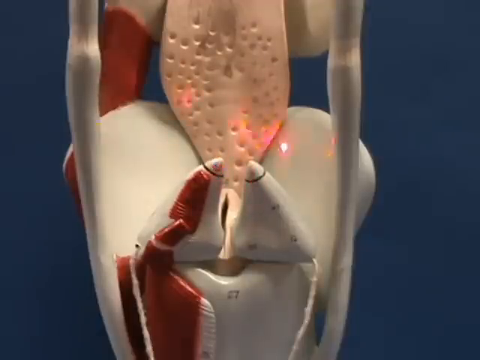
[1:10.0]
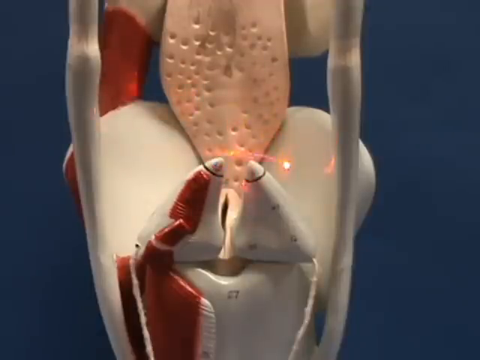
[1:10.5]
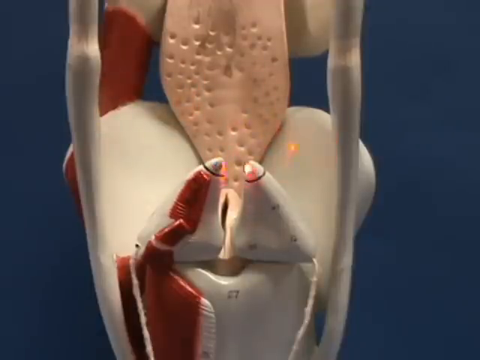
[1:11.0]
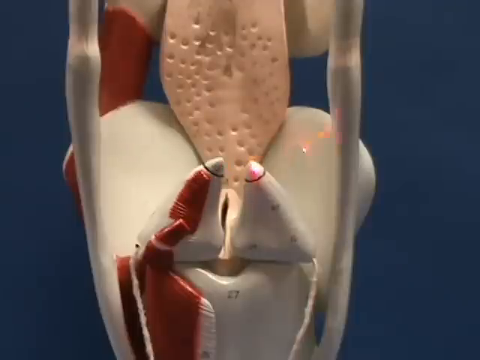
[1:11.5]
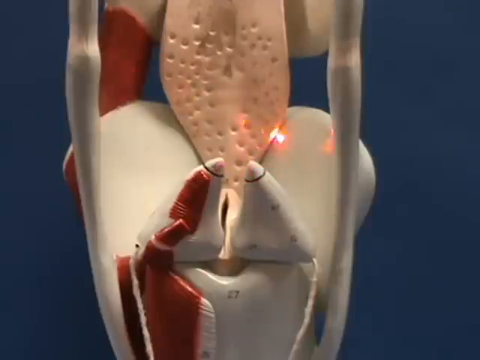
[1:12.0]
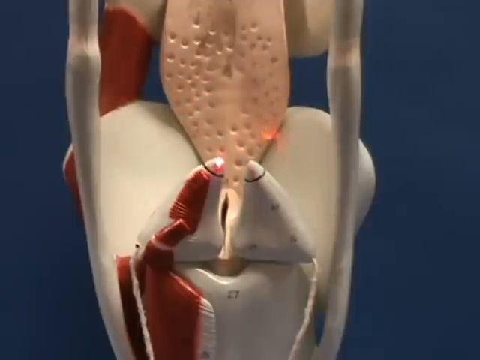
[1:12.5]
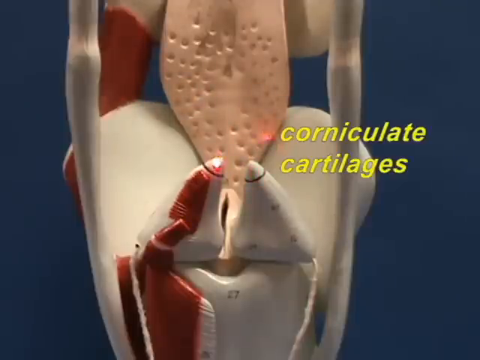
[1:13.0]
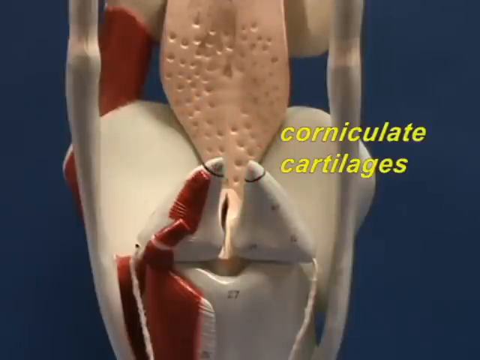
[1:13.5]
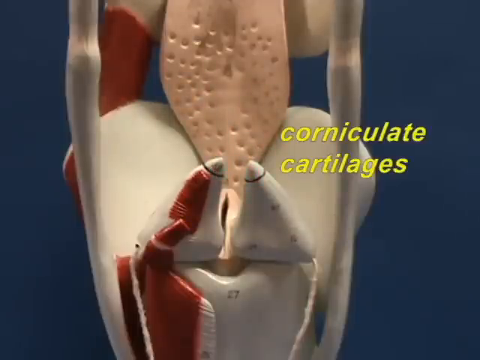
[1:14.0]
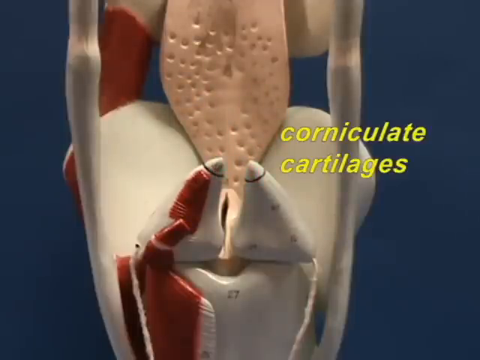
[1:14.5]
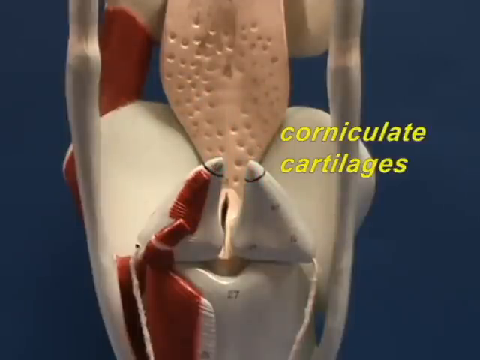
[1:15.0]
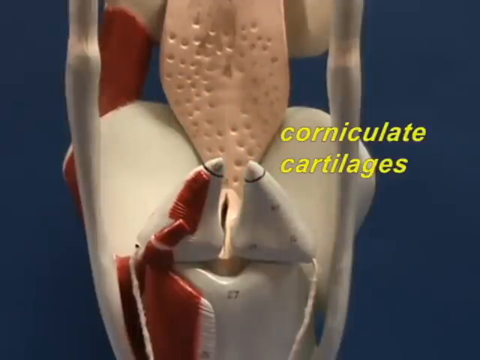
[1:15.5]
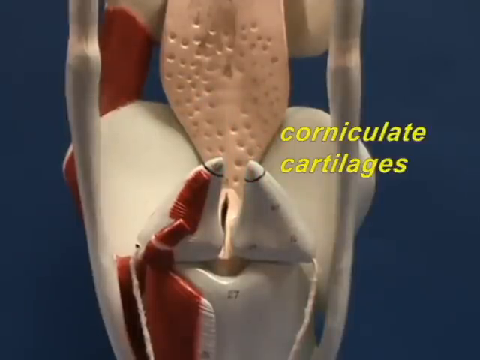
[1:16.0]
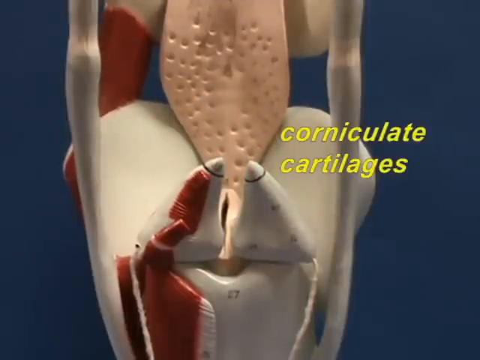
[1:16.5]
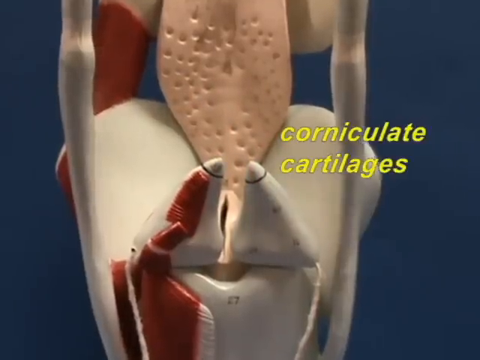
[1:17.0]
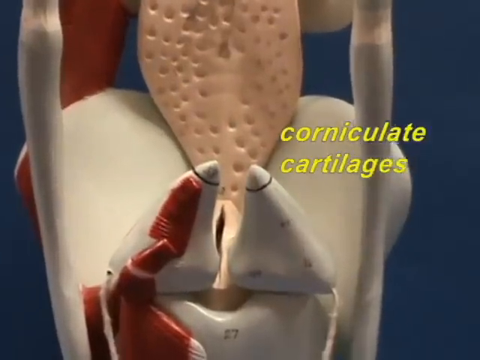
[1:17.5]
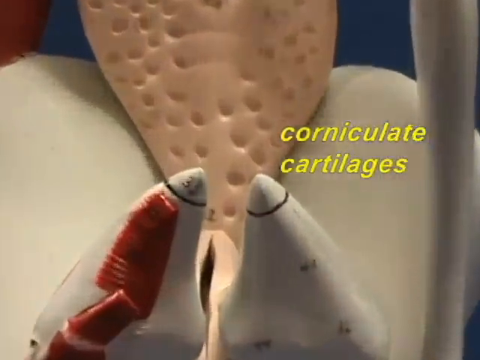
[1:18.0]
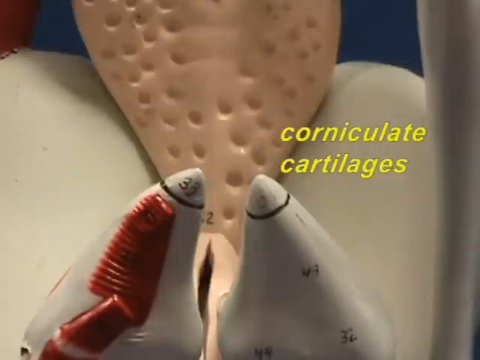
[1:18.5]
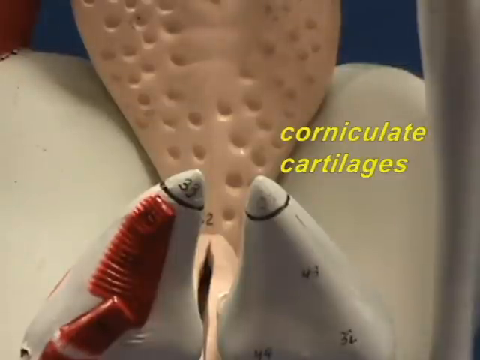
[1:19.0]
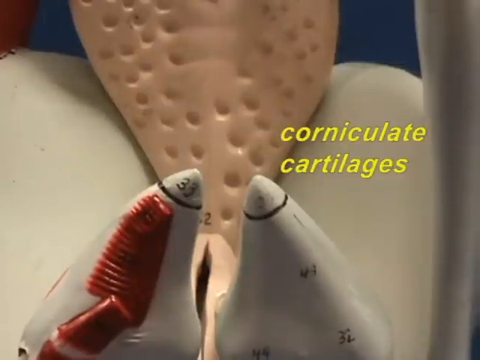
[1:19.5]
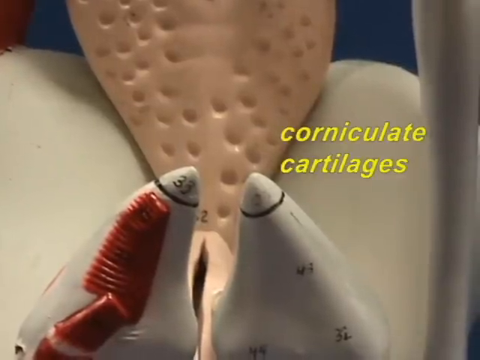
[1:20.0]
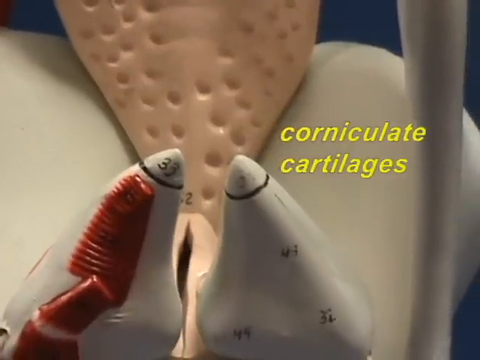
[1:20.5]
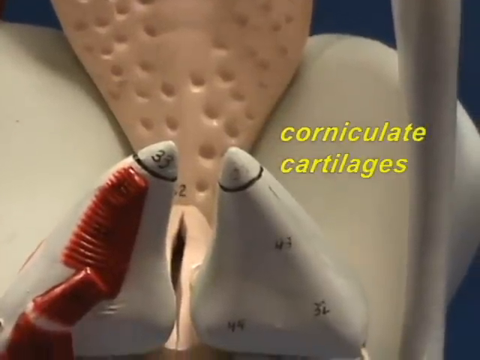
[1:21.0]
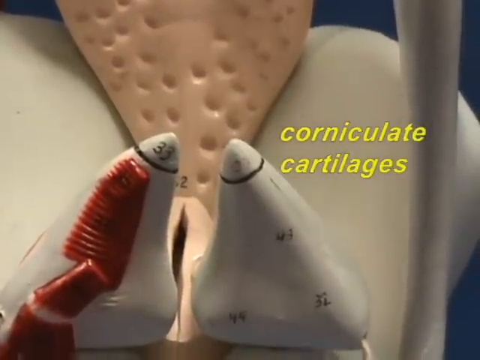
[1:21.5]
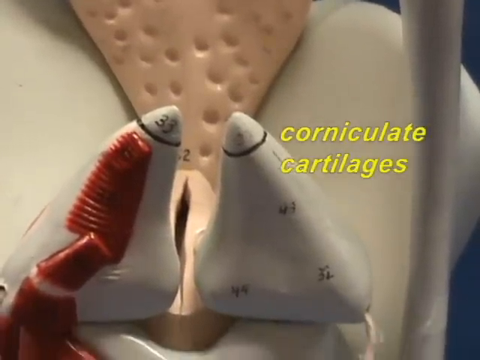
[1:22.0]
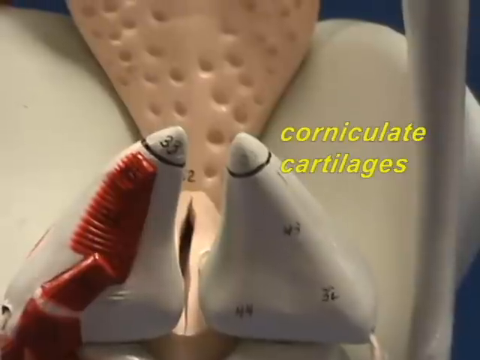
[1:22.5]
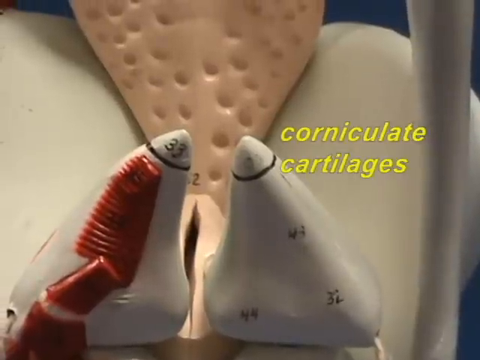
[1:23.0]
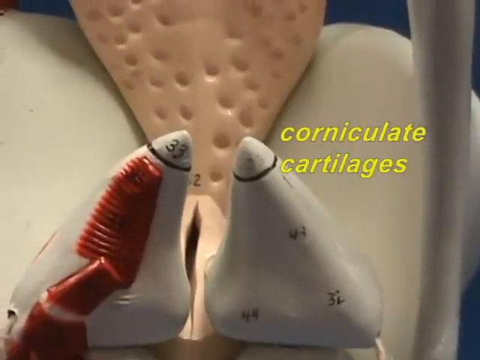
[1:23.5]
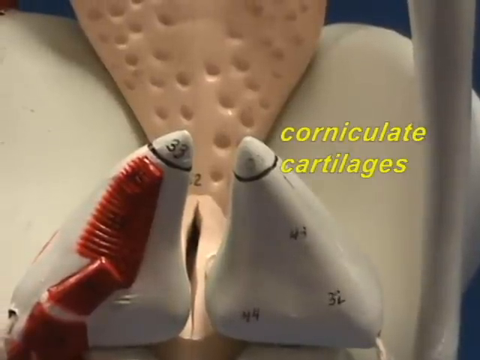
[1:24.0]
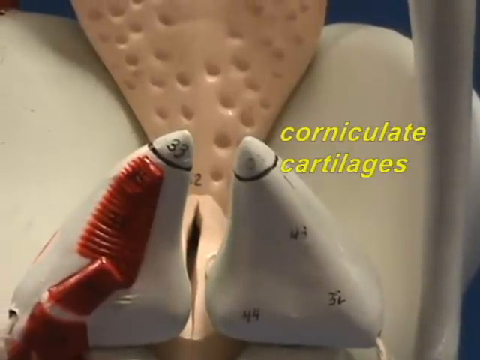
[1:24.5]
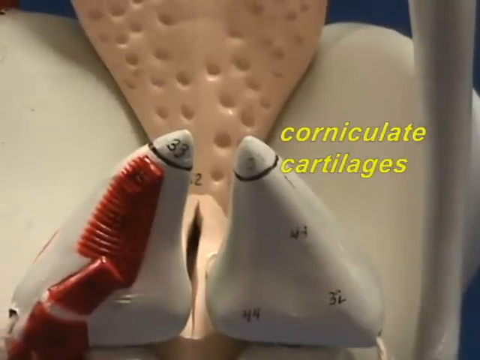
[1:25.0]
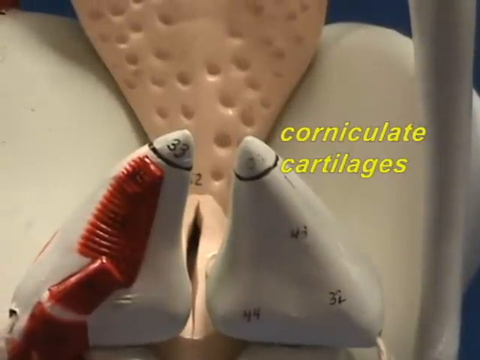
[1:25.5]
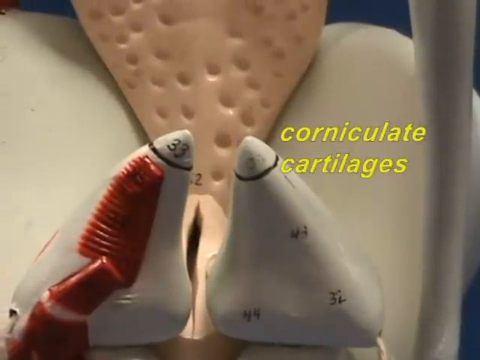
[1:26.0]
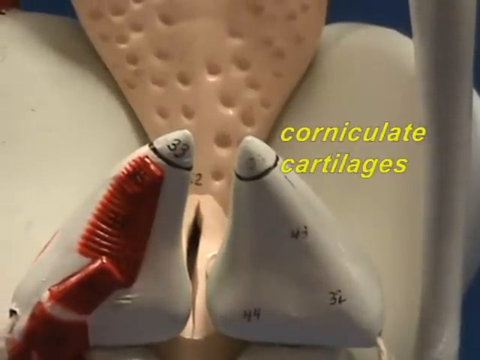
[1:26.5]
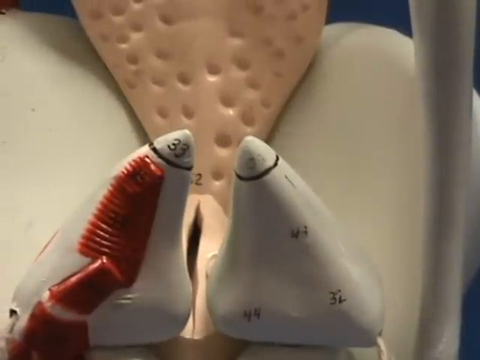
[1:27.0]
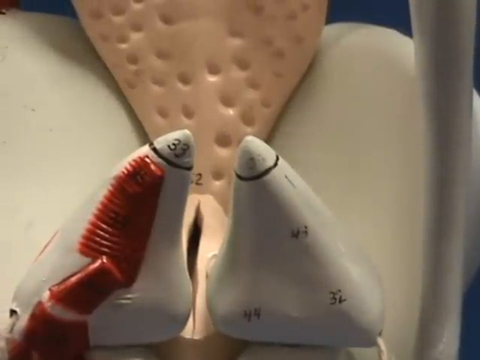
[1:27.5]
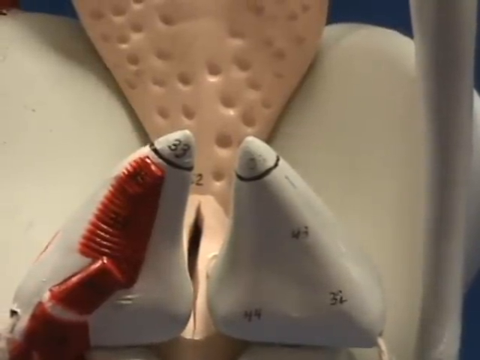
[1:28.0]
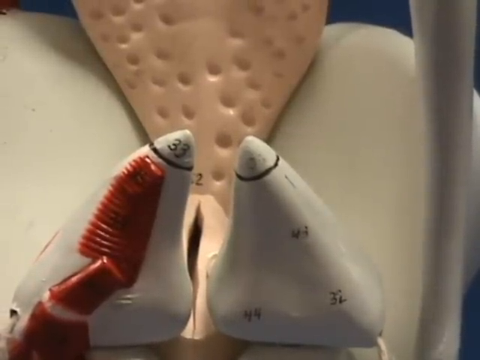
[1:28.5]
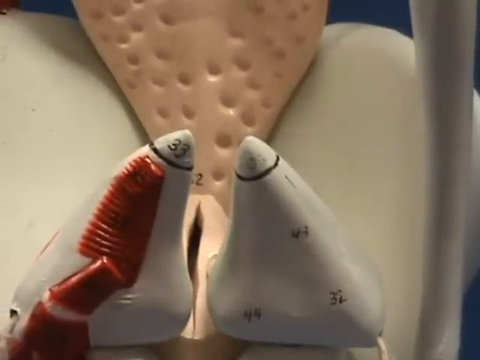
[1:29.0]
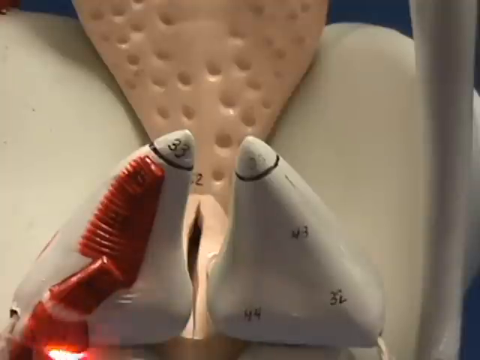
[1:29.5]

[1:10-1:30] Against a dark blue background is a model of a larynx with two skinny bones, other white bones connected to them, and something that looks like a tongue attached to the top bone. Someone standing off screen points a red laser at different areas of the model. He points to a white, bone-like part in the middle of the model, and the words "corniculate cartilages" pop up in yellow to the right. The view then zooms in on that area, where the pieces look like two large teeth: the left one is white and pointy with a red stripe down its outside, and the right one is just white and pointy. He then starts moving the laser pointer over other places.